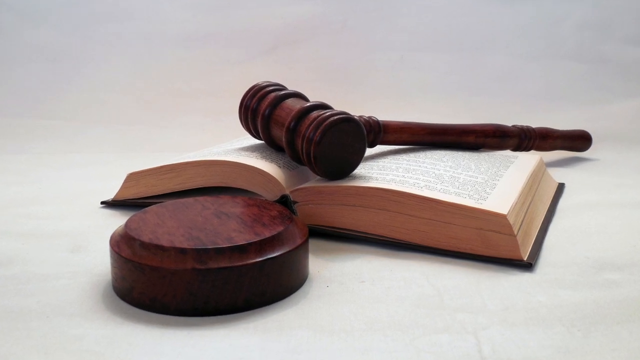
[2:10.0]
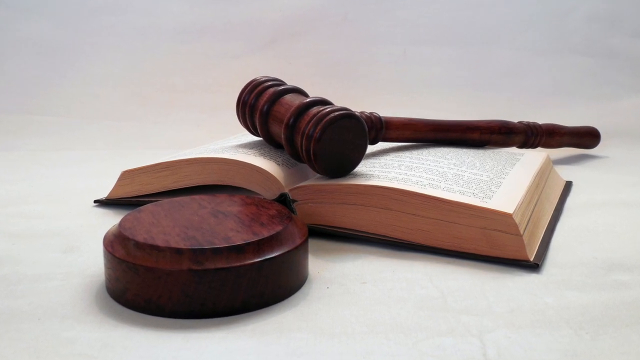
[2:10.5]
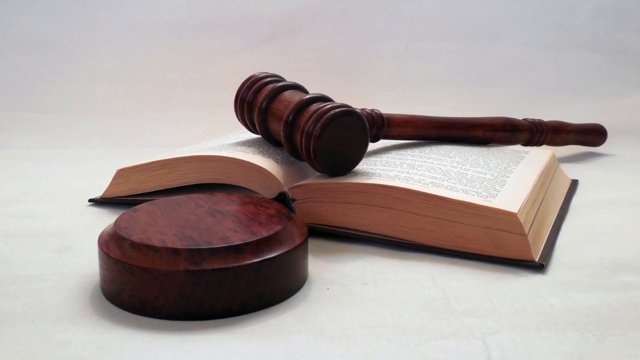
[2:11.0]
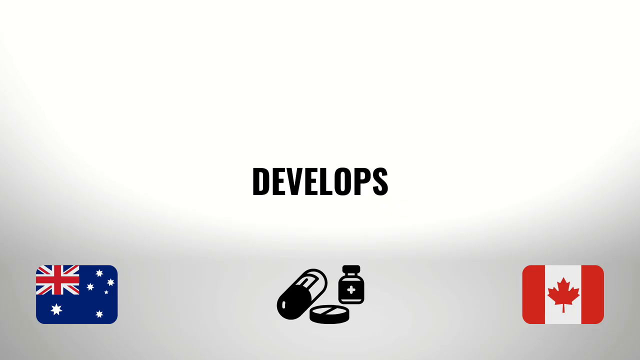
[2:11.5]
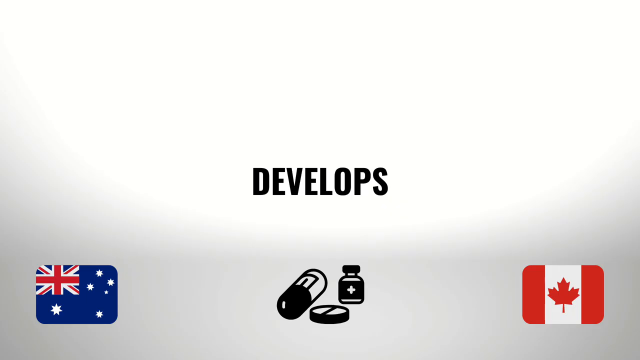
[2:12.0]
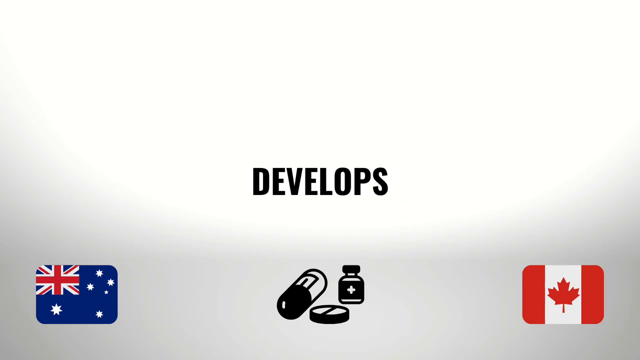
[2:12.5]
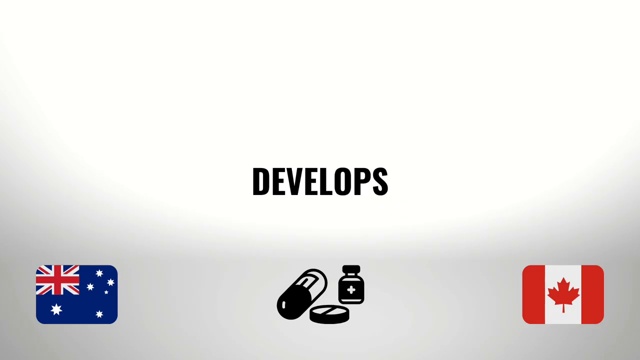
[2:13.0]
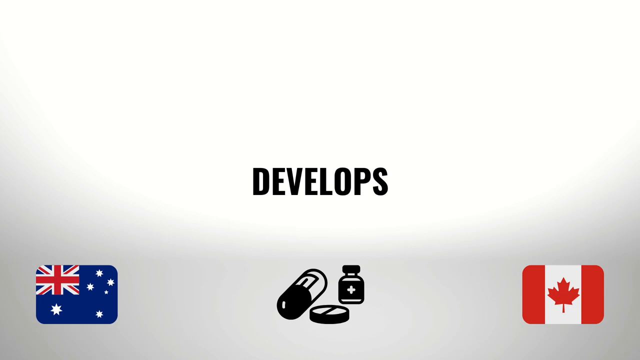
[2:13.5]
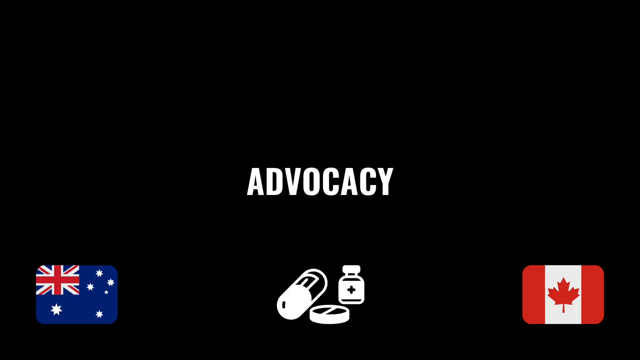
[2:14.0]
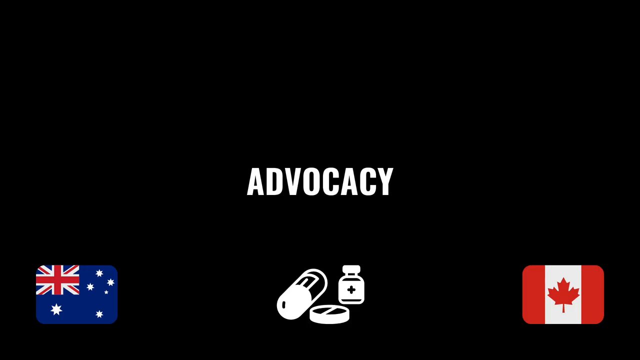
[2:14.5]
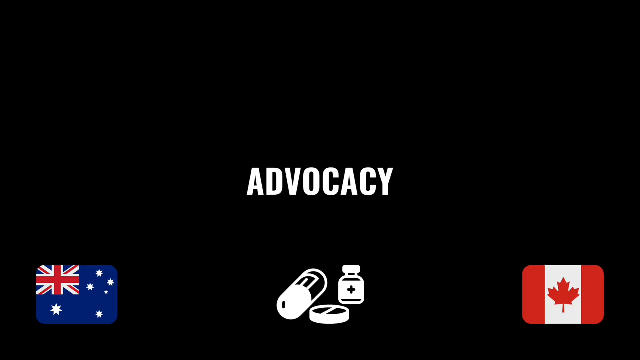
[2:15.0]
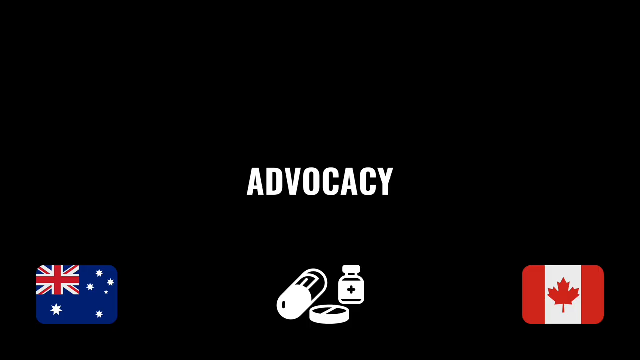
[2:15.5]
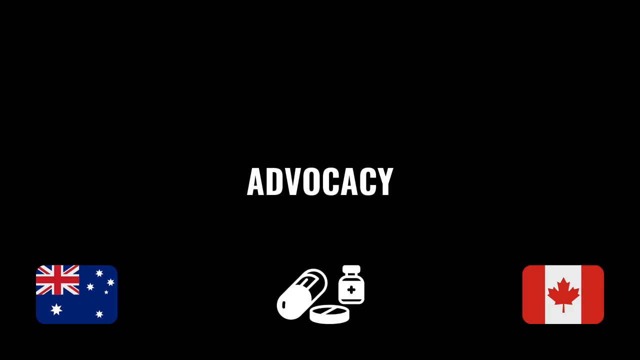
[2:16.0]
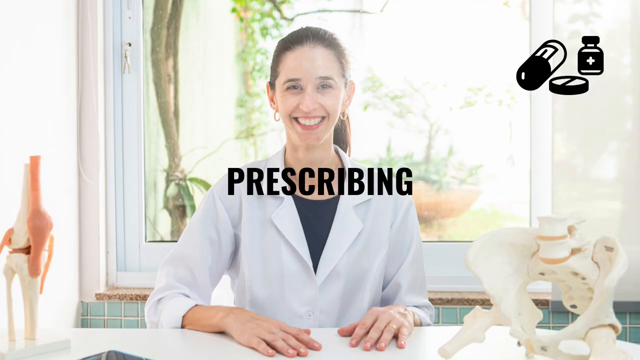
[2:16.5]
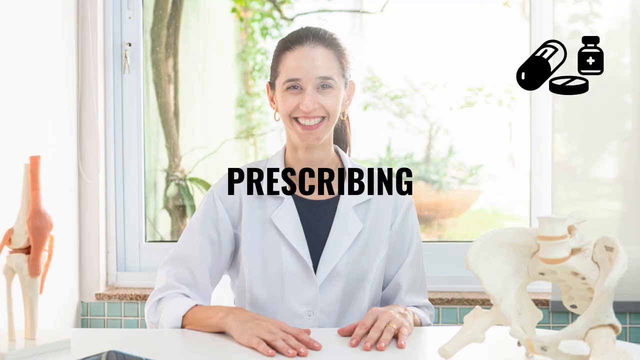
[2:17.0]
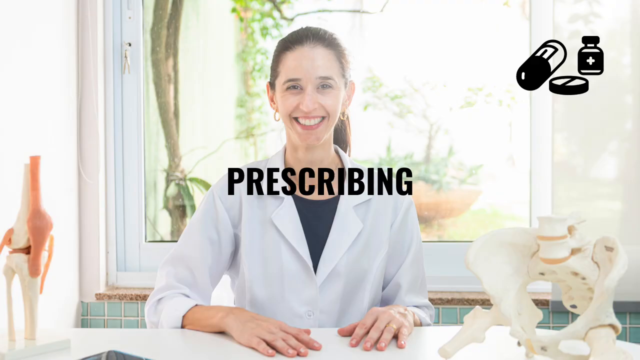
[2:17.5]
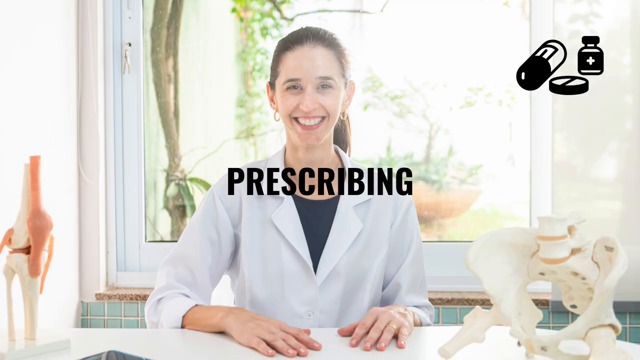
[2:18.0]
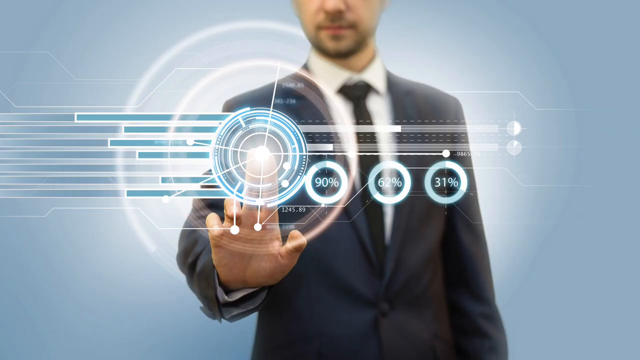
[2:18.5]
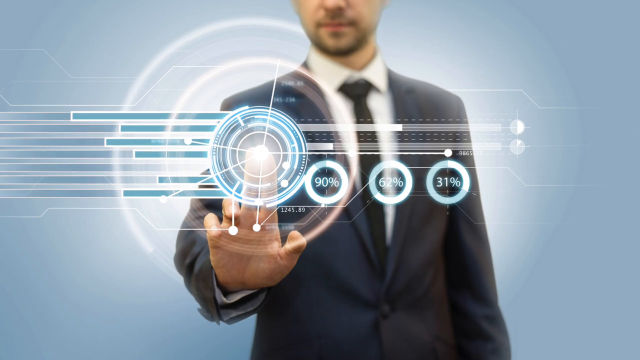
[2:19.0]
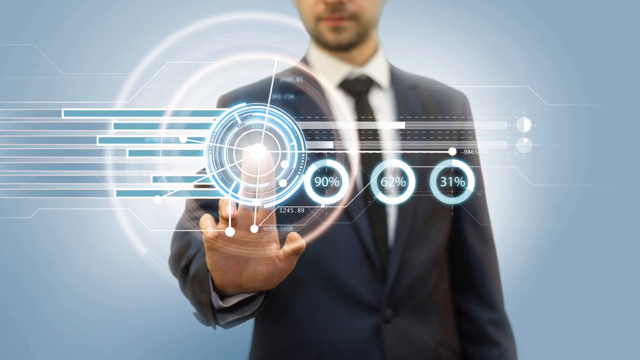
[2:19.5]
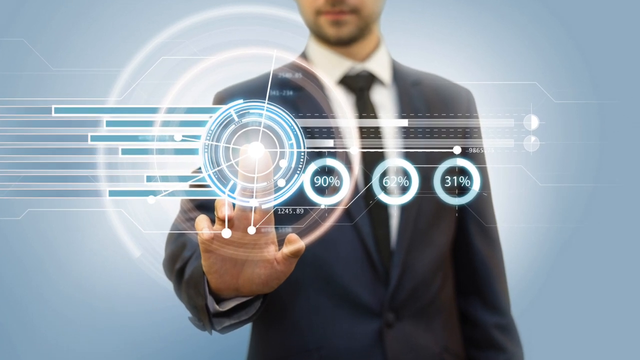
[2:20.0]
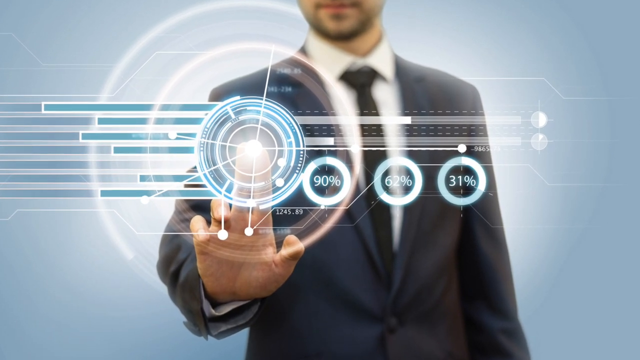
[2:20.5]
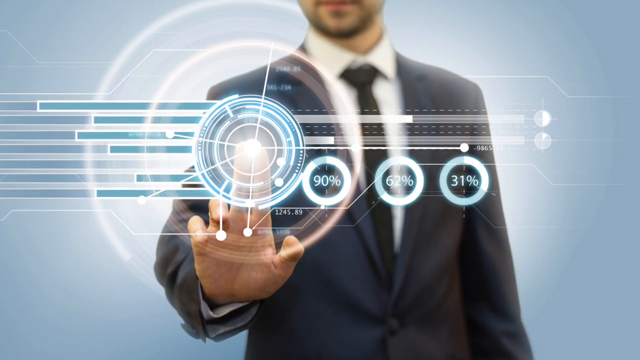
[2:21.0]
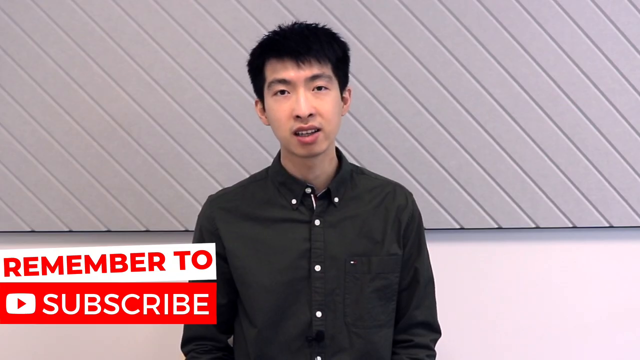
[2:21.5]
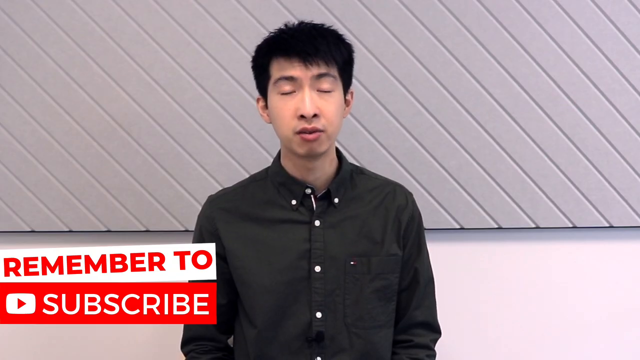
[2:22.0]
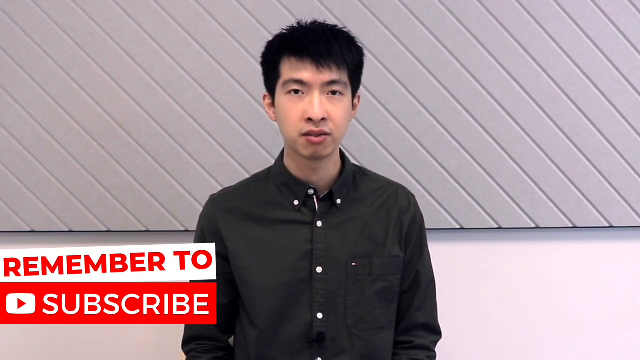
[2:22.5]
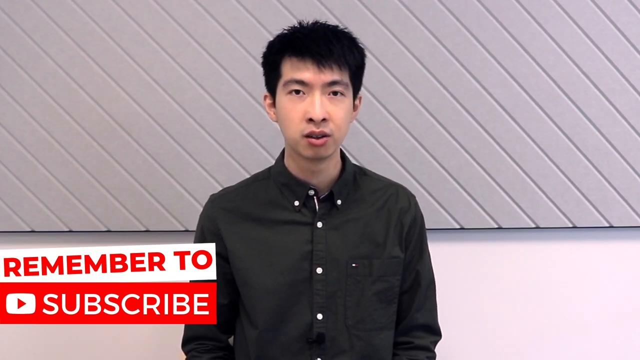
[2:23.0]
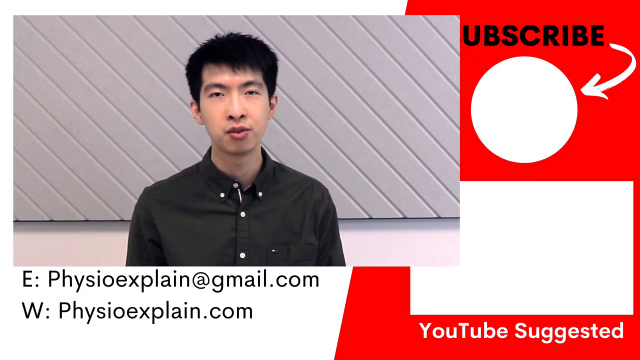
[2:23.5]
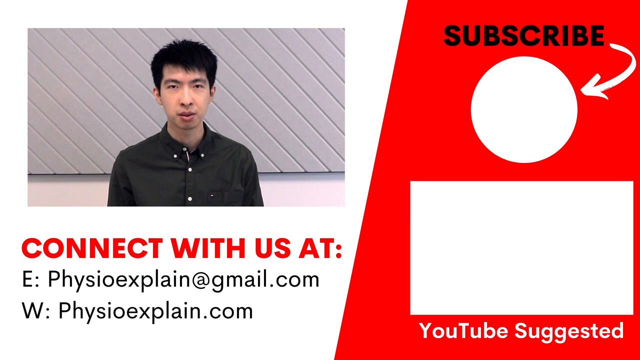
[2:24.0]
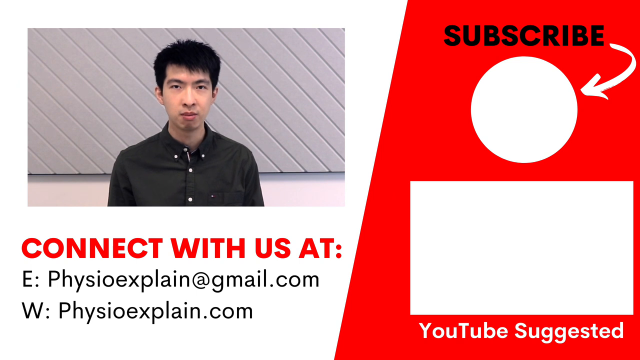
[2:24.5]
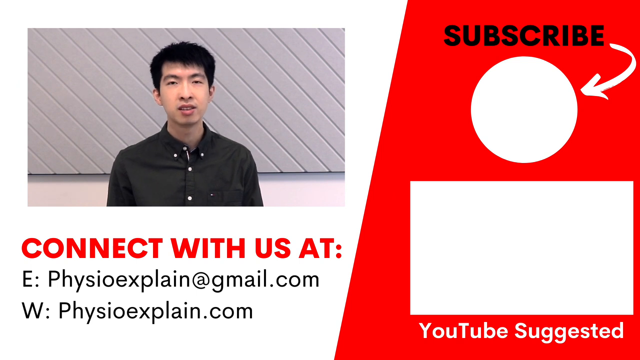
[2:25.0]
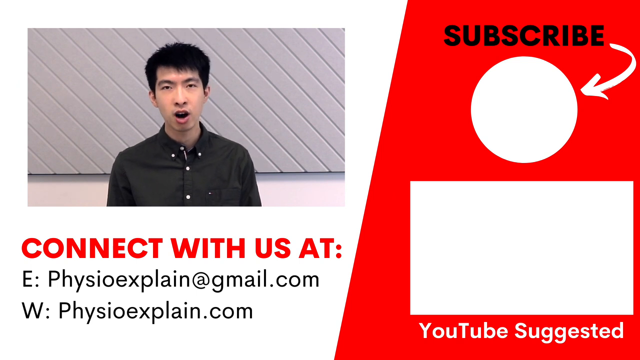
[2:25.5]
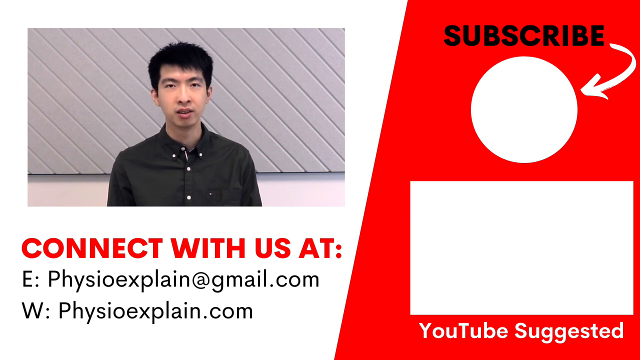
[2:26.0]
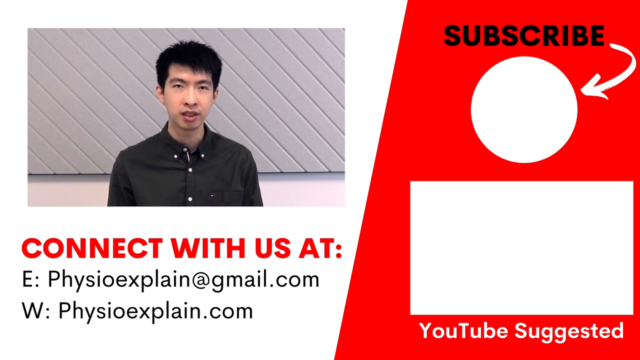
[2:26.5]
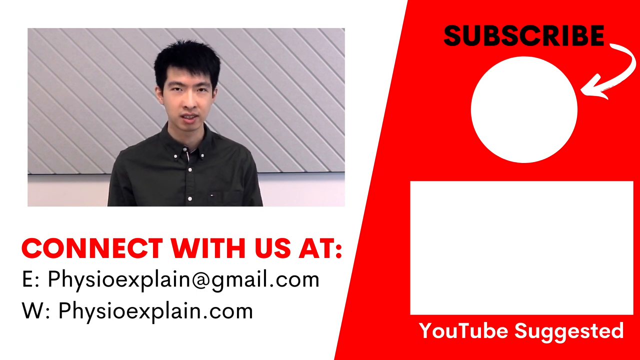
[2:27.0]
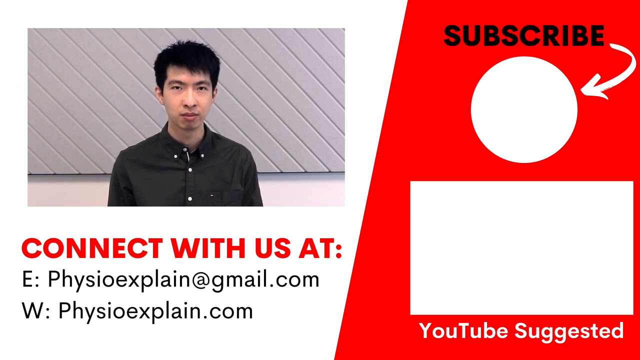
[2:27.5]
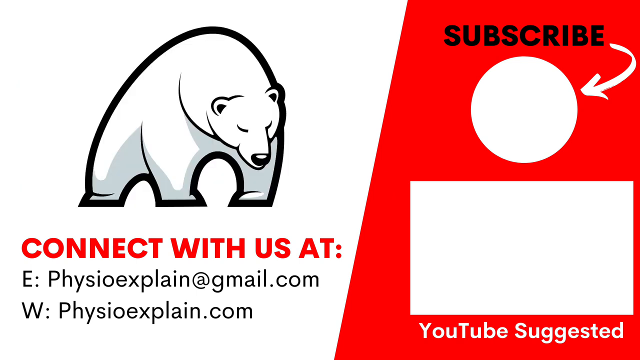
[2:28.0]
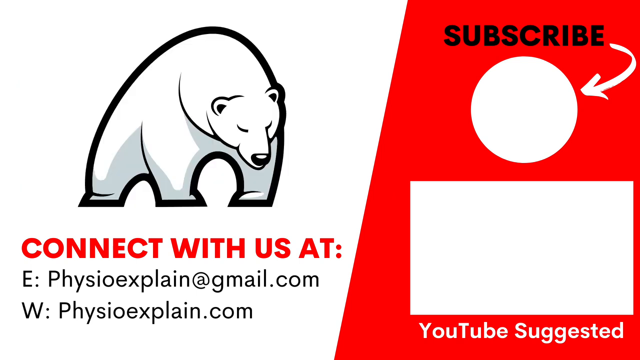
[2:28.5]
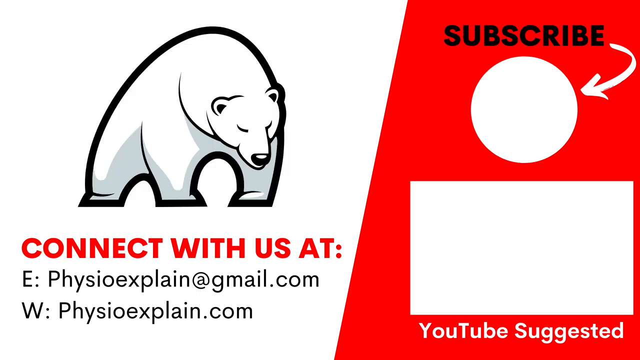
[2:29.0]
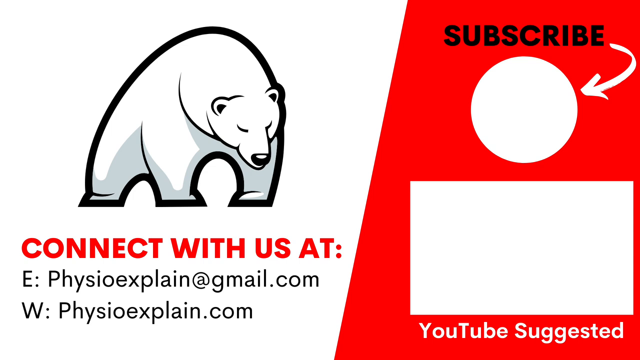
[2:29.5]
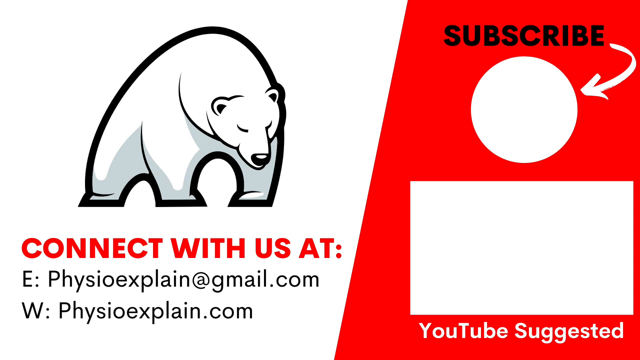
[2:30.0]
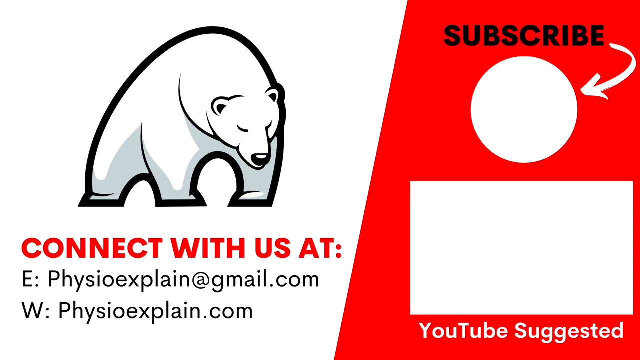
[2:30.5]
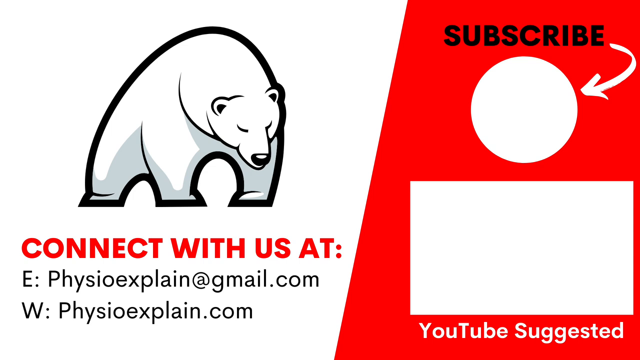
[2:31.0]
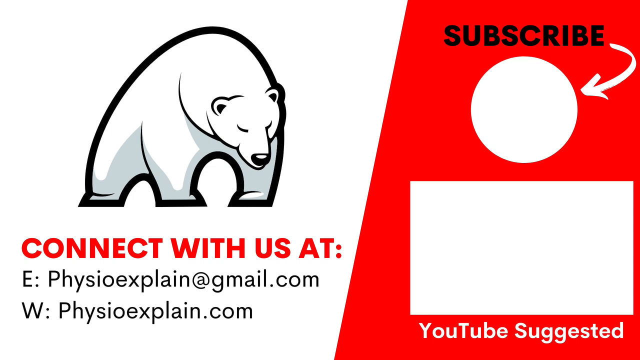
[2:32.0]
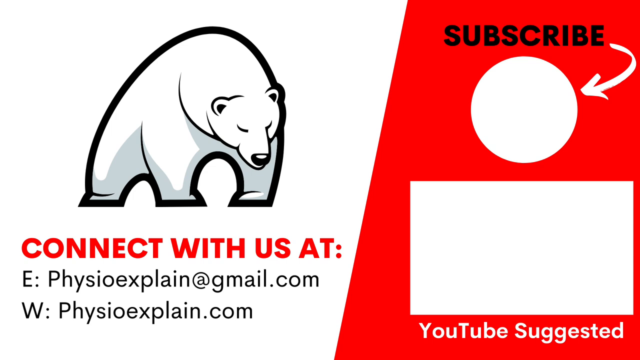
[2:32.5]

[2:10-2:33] Right after "develop," text says "advocacy," then "prescribing." Behind "prescribing" is a lady in a white coat smiling broadly. She has straight black hair fastened at the back of her head, wears golden loop earrings, and has a black shirt under the white coat. Part of a human skeleton is to her right, and to her left, in the background, is a picture of a man who looks like he is touching a display on an electronic device with his right hand. Then "remember to subscribe" appears in red on screen, and an Asian gentleman with short straight black hair is talking on screen. He wears a black button-up shirt with white buttons, not fastened all the way to the top. The video cuts to a smaller clip of him talking, and below his face text says "connect with us at physio explainer gmail.com," then "physio explainers" and the website "physio explain.com." A picture of a bear then appears.